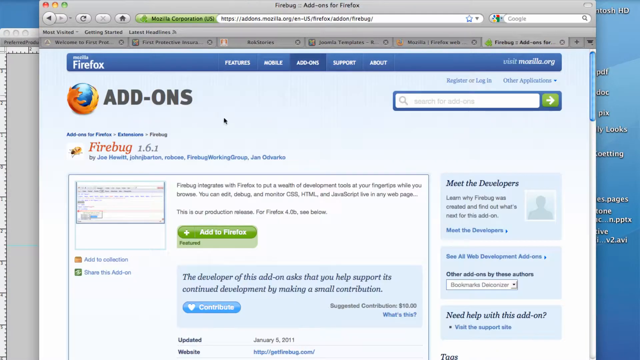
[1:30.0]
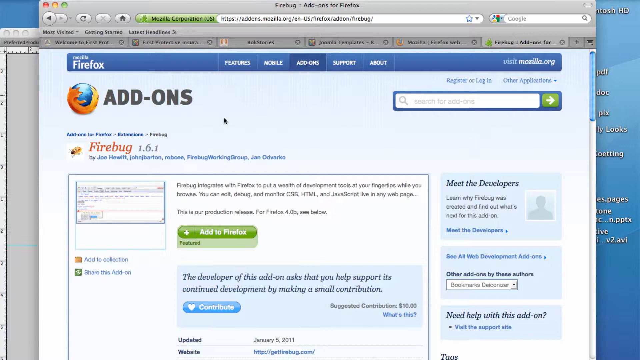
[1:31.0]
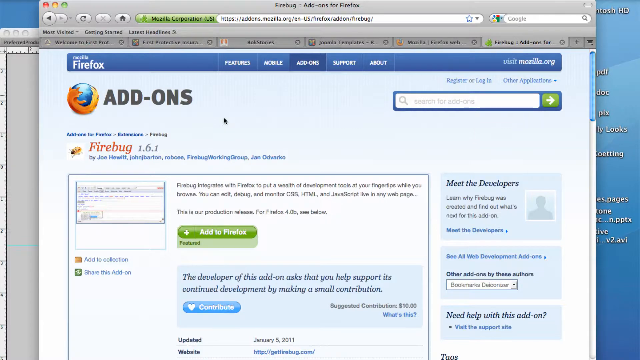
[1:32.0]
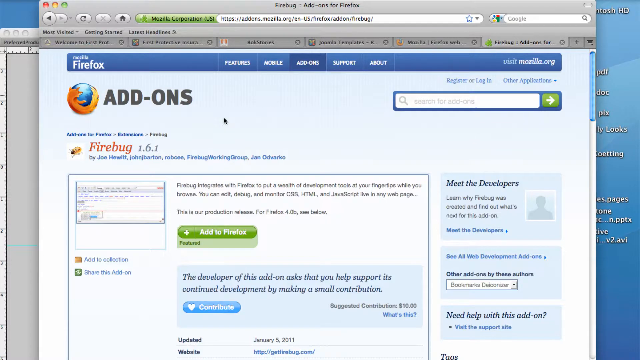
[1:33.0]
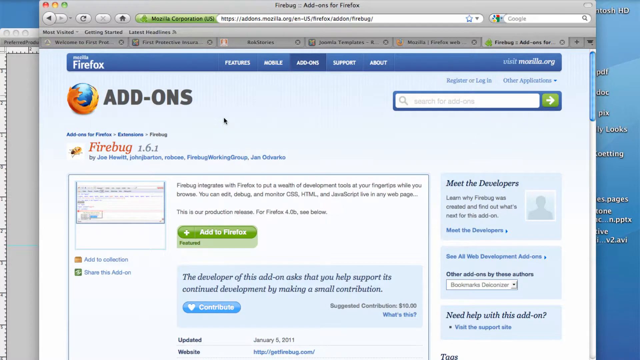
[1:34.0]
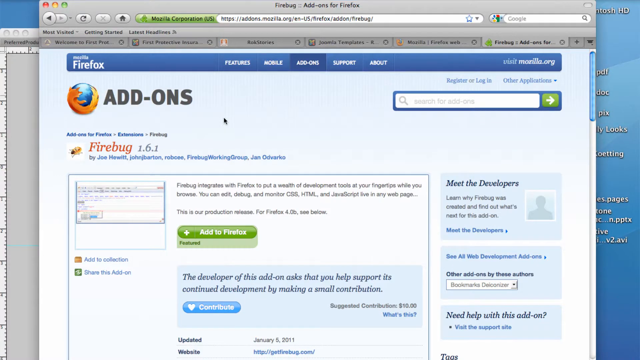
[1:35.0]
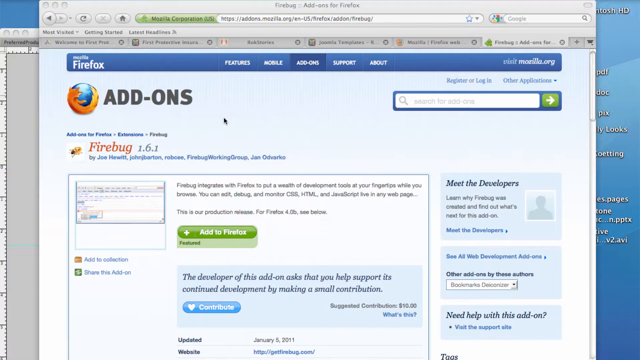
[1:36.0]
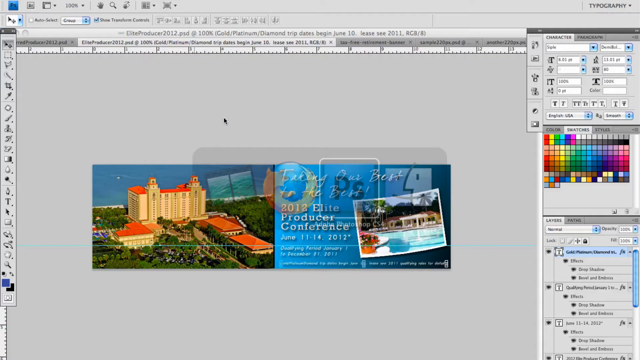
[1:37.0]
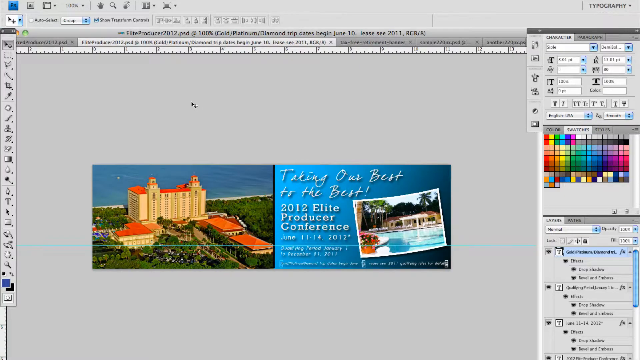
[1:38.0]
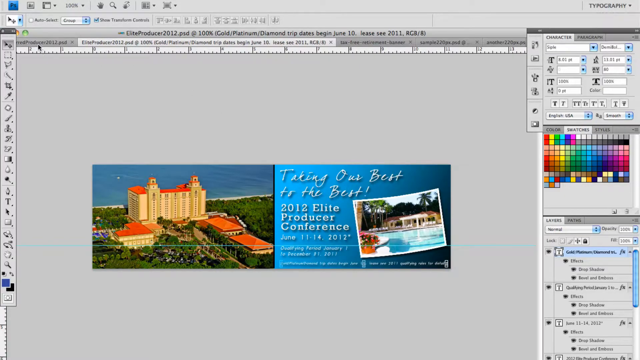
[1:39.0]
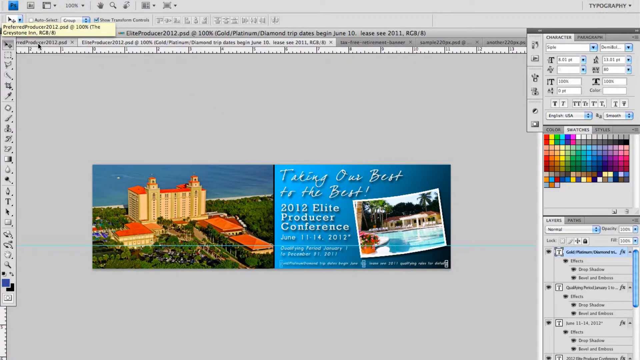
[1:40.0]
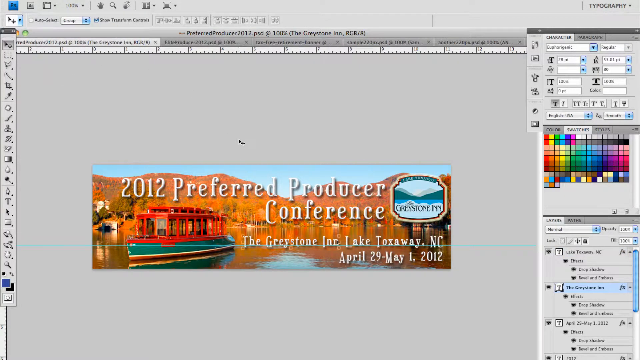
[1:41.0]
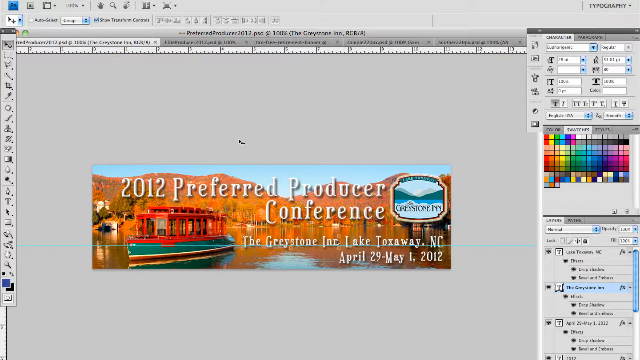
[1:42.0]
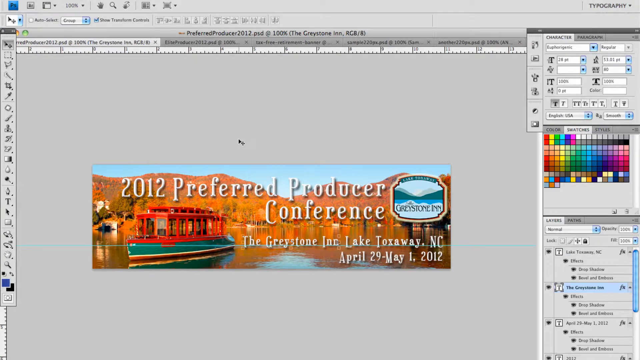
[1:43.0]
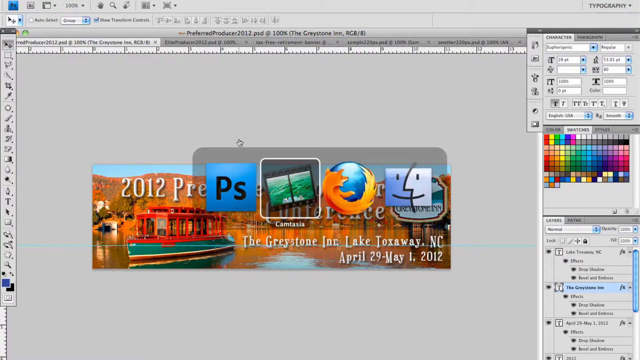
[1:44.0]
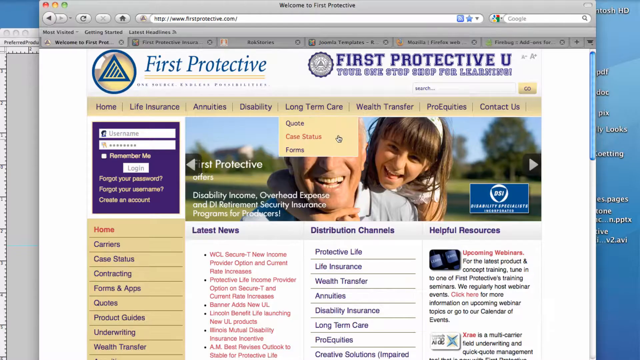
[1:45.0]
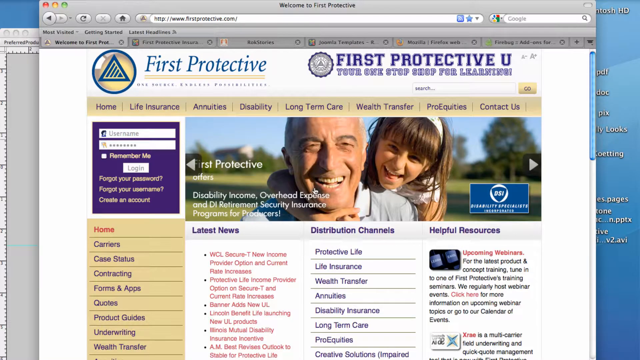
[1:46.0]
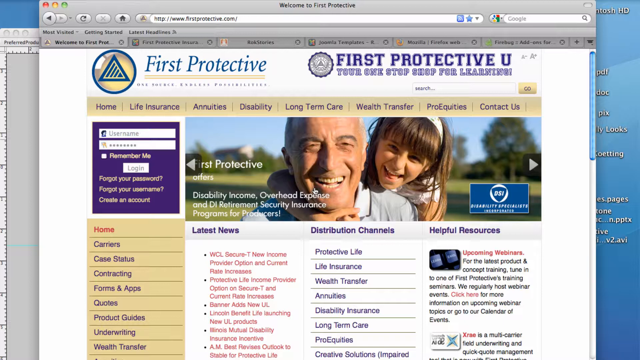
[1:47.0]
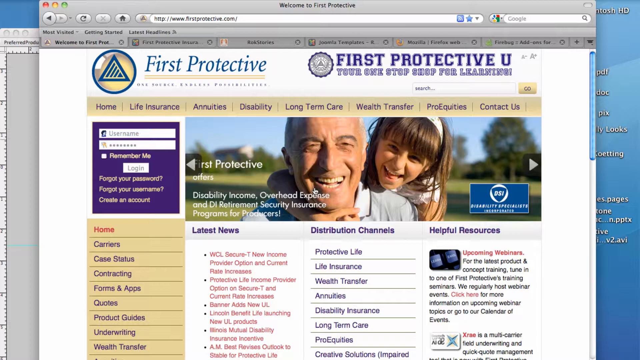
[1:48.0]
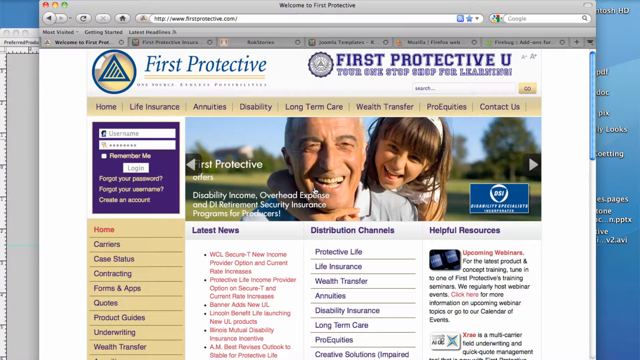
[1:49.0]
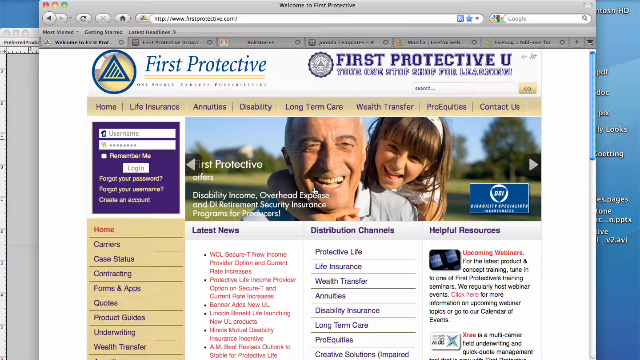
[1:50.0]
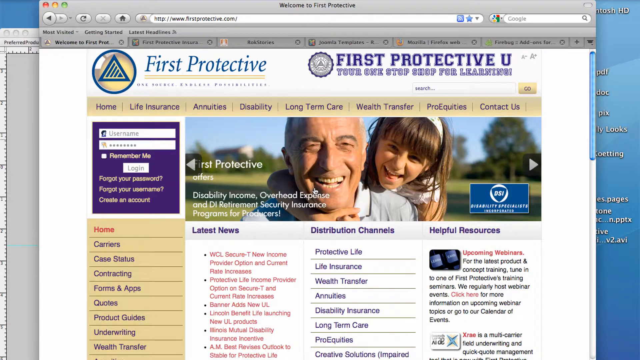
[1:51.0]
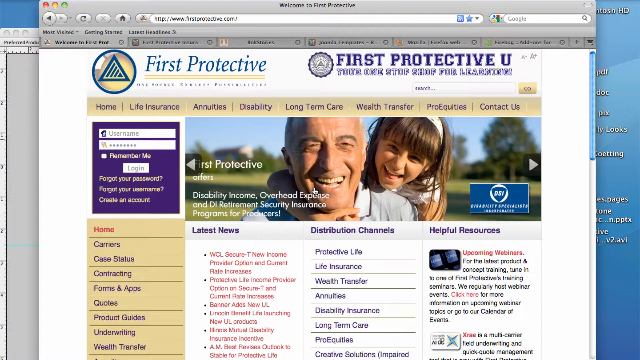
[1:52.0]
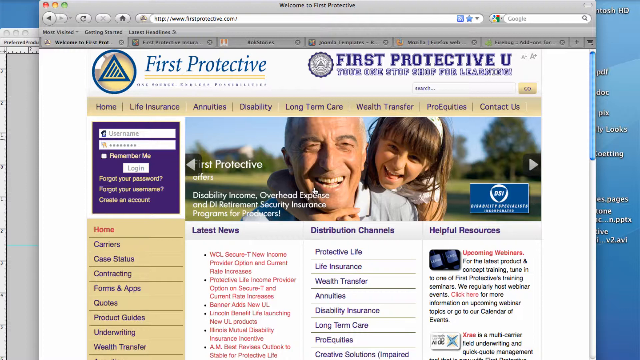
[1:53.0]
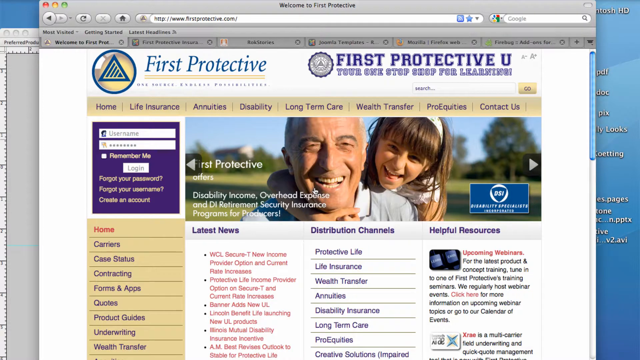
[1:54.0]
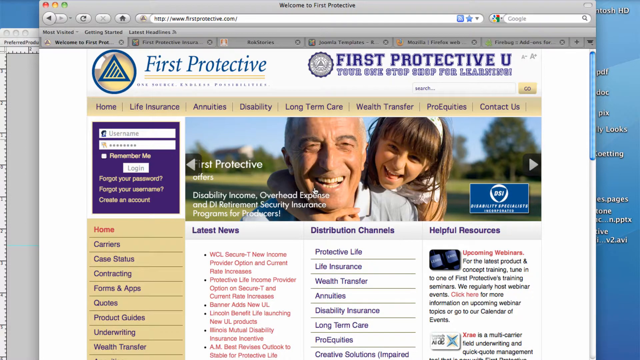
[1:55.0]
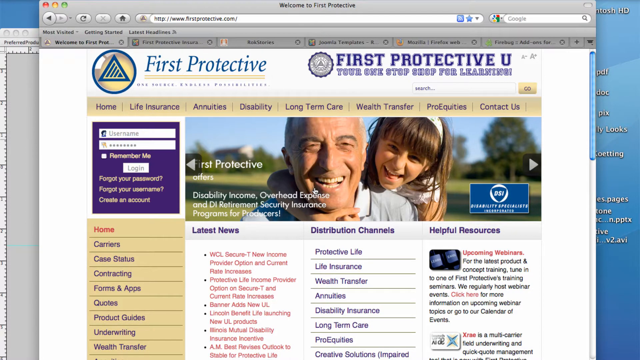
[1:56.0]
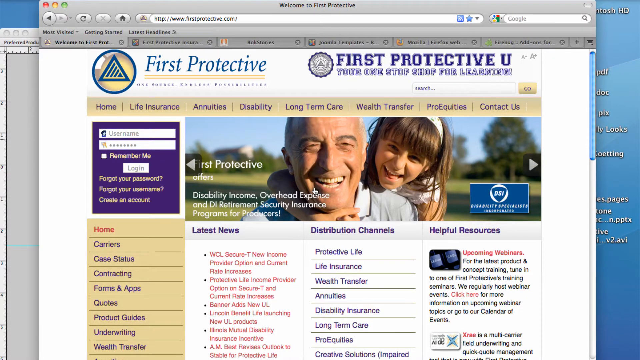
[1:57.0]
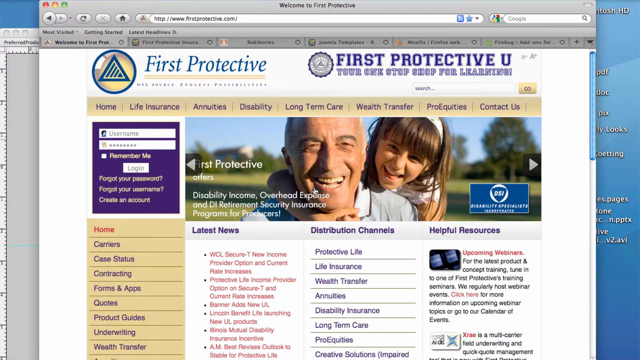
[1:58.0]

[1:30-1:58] An add-ons page for Mozilla Firefox appears, with the Firefox symbol and a blue banner above it that says "Mozilla Firefox." In the middle of the blue banner is "Features," followed by "Mobile," "Add-ons," "Support" and "About." Beneath the Firefox add-on symbol is "firebug161," possibly the extension the user is trying to download. The tab shortcut is pressed and a number of symbols pop up, and the screen switches to Adobe Photoshop on the Macintosh. It shows a picture of a large building that looks like the Detroit train station. Cursive text to the right of the building is unreadable, but beneath it the text says "2012 Elite Producer Conference."